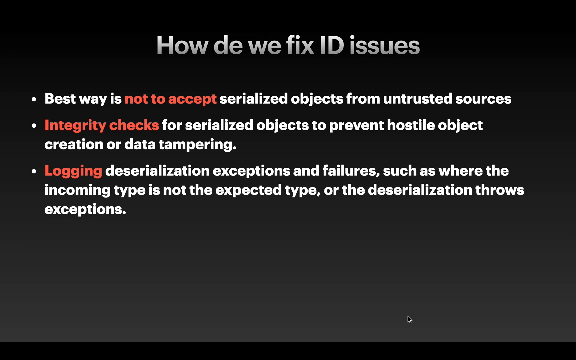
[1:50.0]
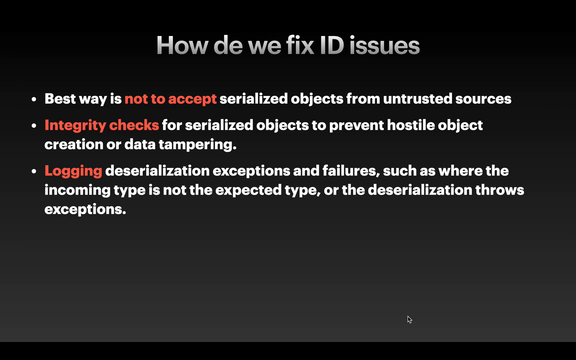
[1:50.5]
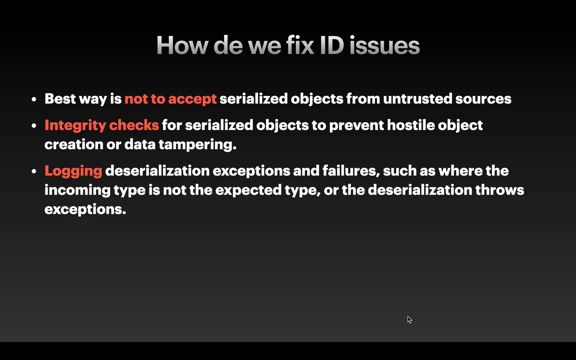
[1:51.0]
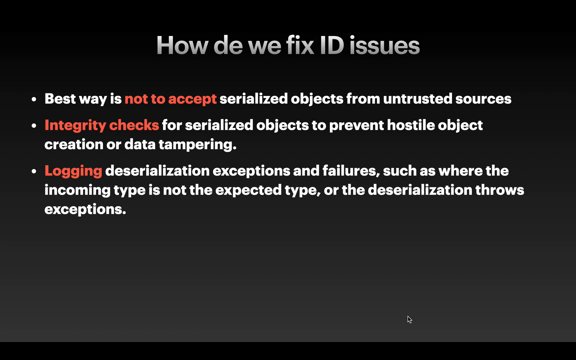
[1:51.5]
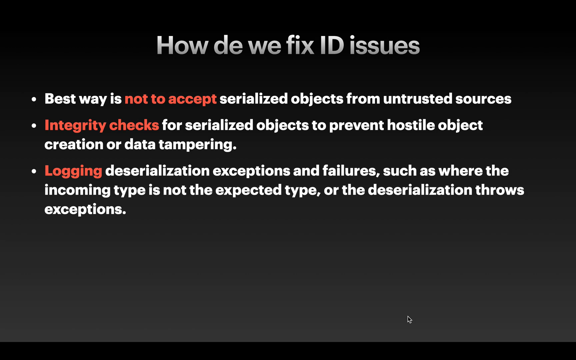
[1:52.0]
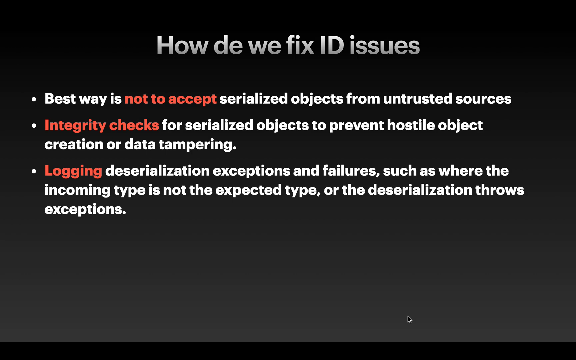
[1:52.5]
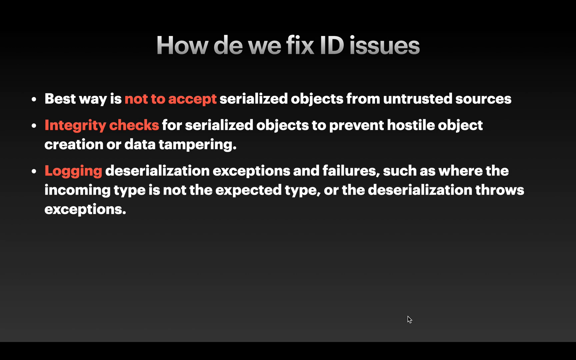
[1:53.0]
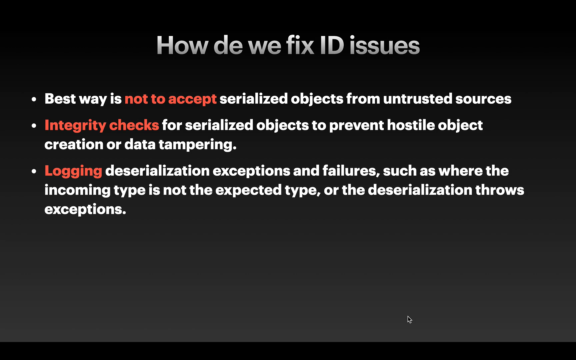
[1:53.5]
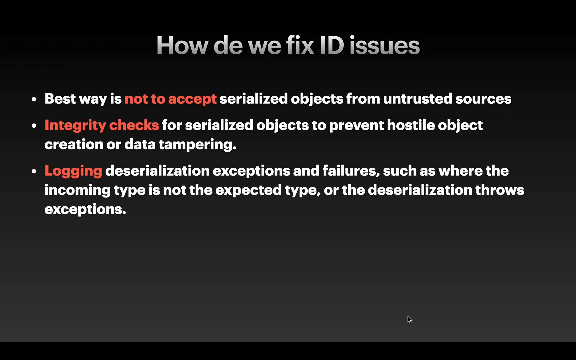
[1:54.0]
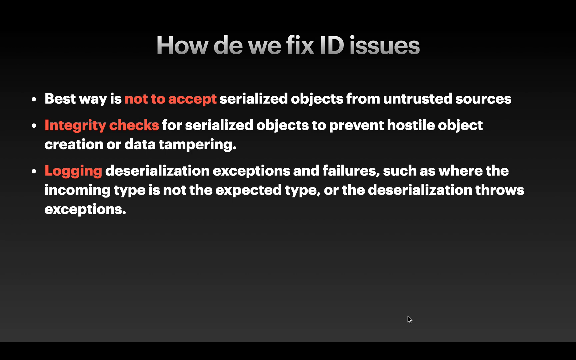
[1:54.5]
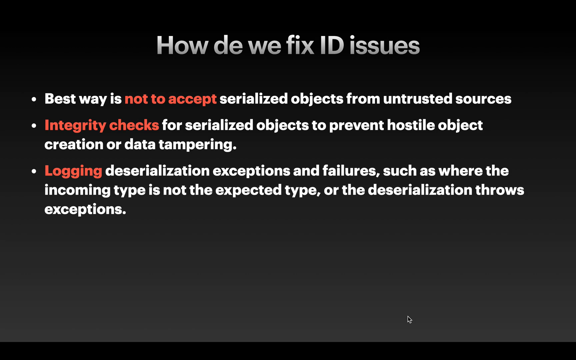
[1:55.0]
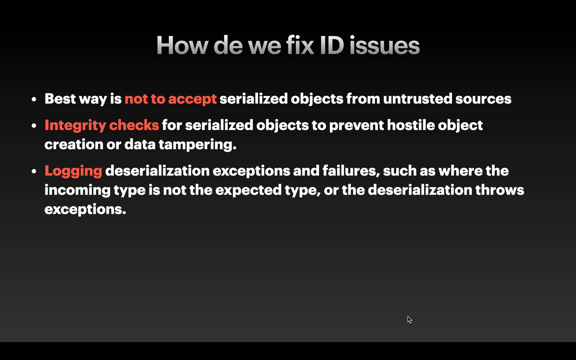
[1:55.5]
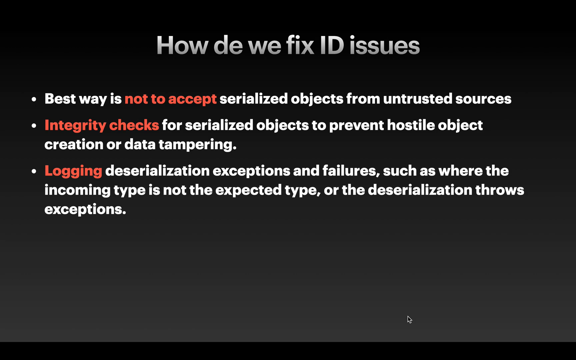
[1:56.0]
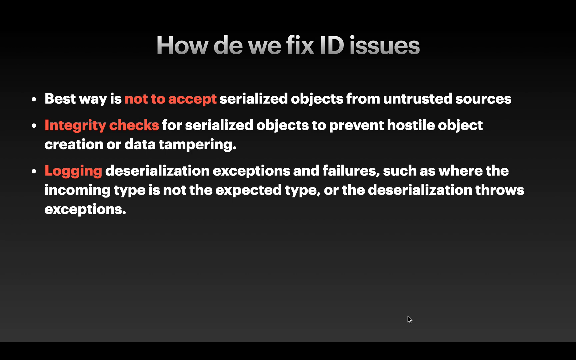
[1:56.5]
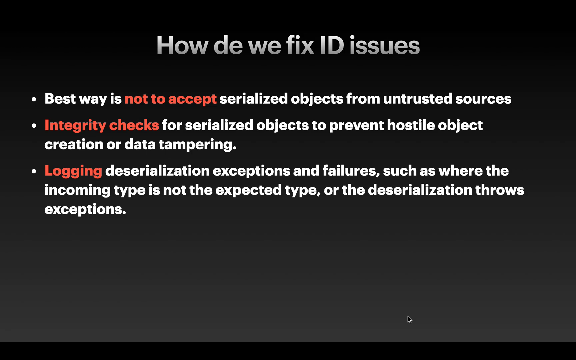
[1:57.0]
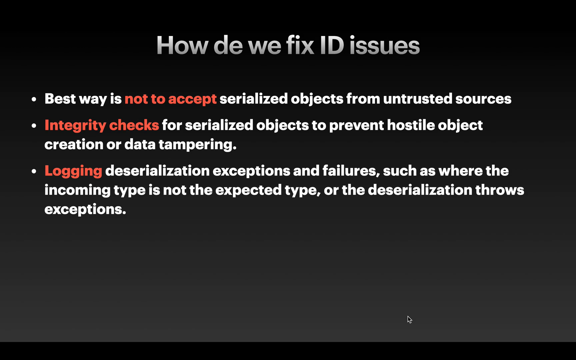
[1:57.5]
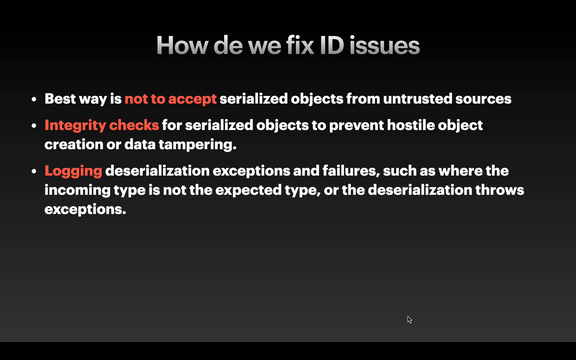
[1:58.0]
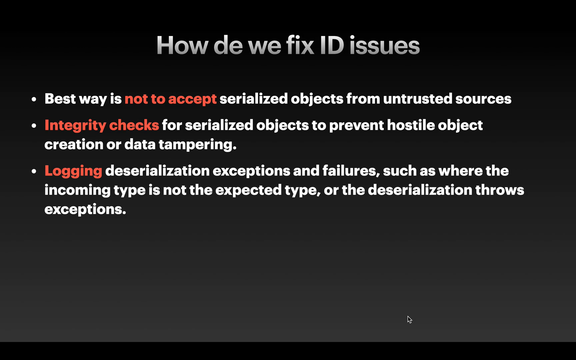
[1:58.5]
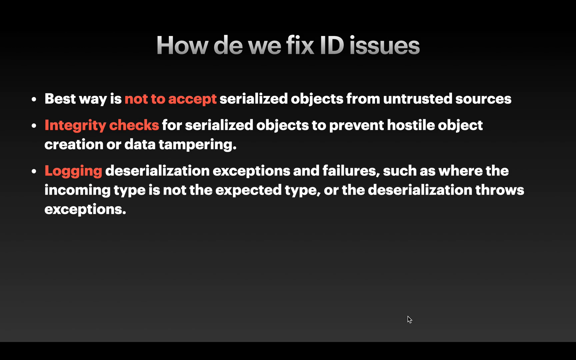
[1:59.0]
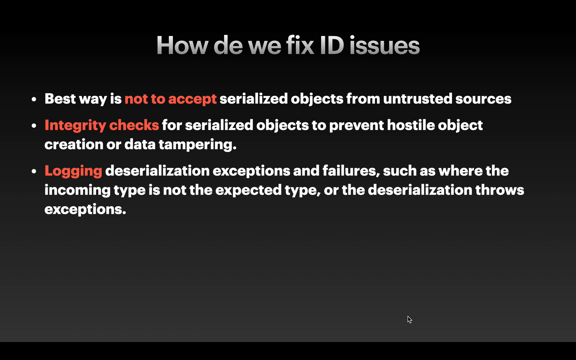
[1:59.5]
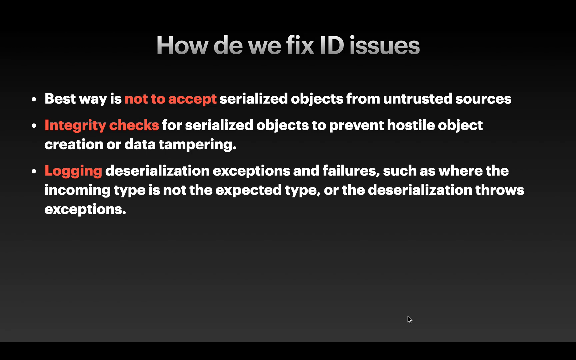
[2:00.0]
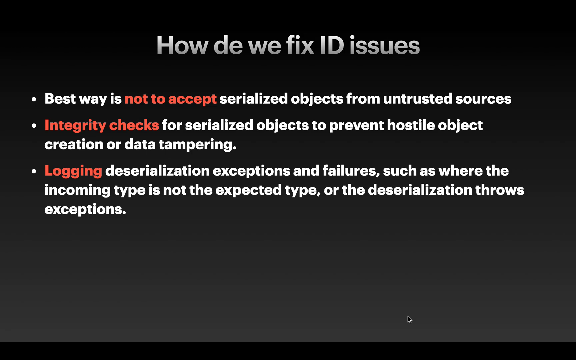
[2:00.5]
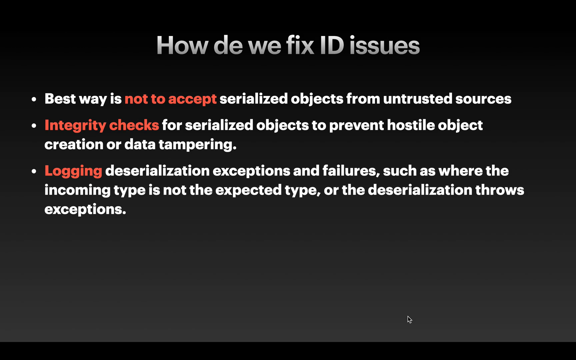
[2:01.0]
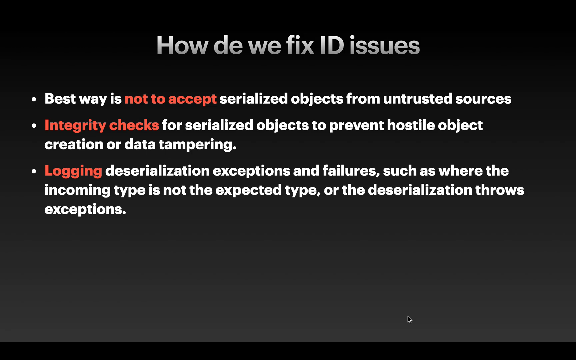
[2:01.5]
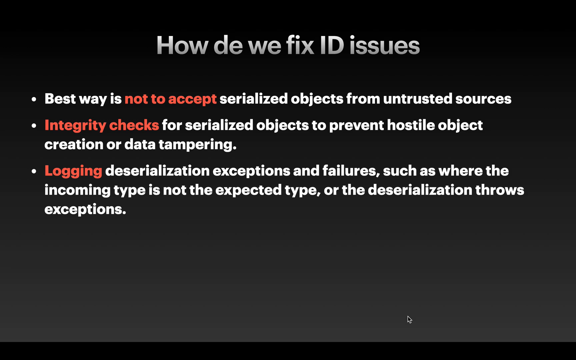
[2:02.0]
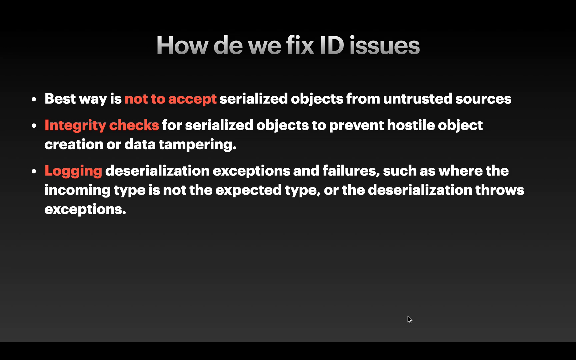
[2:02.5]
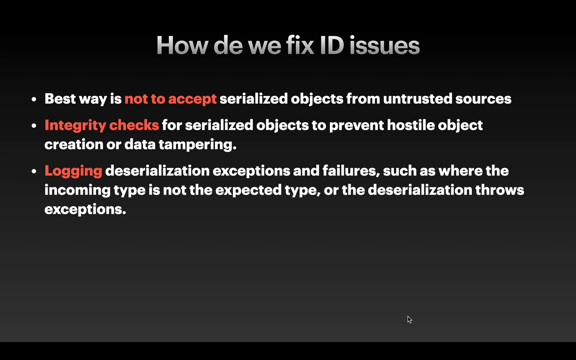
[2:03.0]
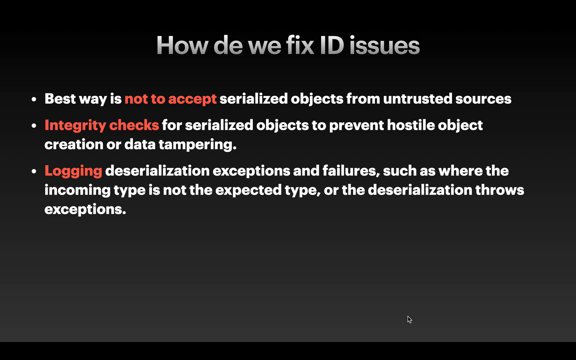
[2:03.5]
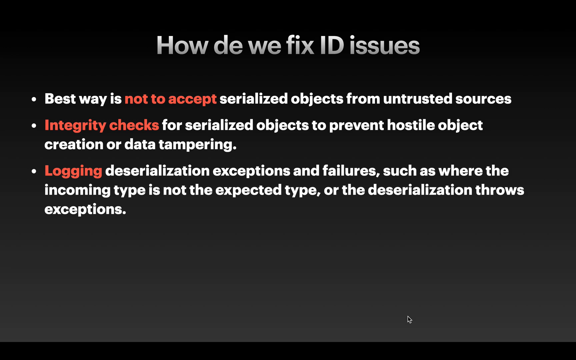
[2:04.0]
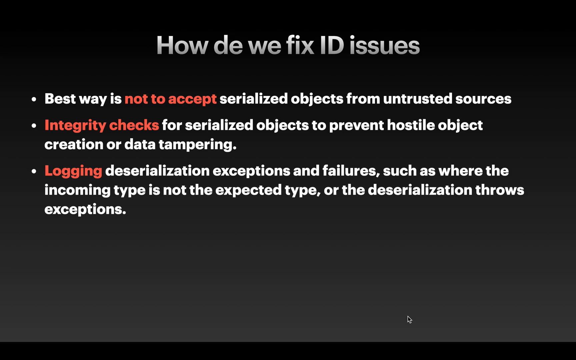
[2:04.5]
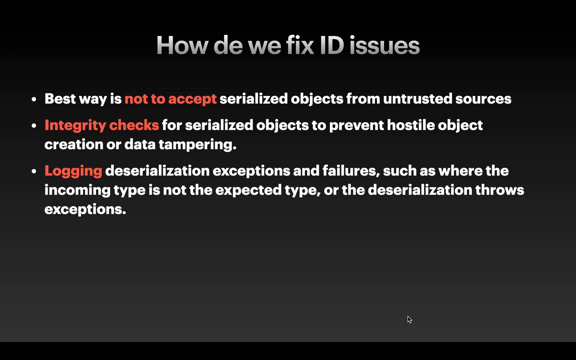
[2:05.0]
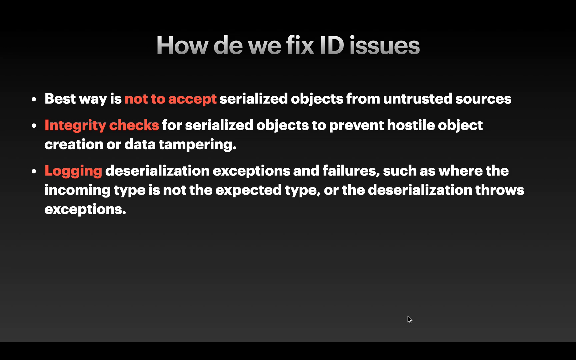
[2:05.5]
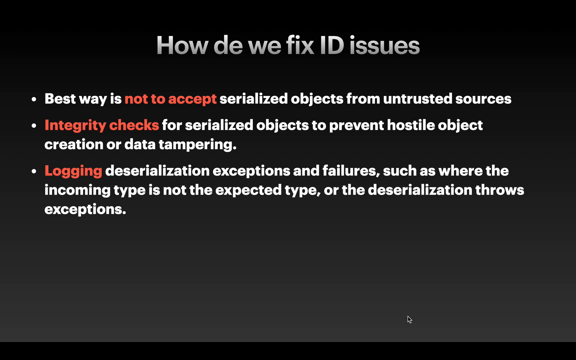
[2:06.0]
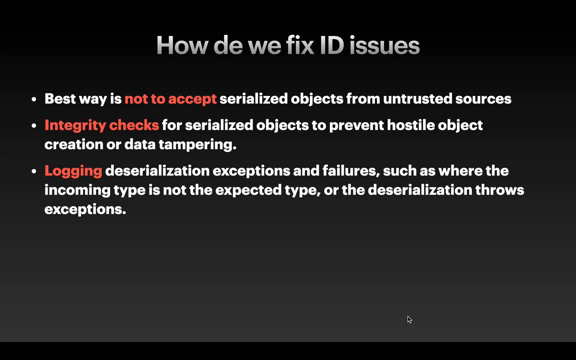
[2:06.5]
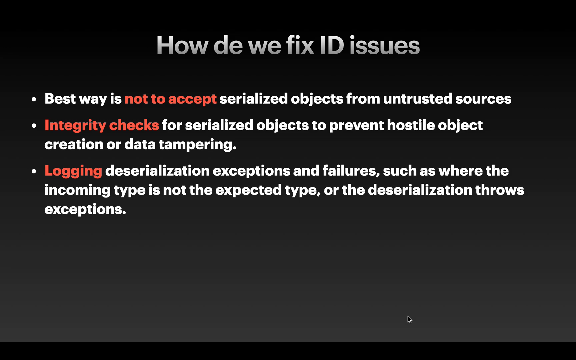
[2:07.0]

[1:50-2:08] The "how do we fix ID issues" slide is still shown, with bullet points. The first says the best way is not to accept serialized objects from untrusted sources, with "not to accept" highlighted in red letters and the rest in white. The second is integrity checks for serialized objects to prevent hostile object creation or data tampering, with "integrity checks" highlighted. The third is logging deserialization exceptions and failures, such as where the incoming type is not the expected type, with "logging" highlighted.